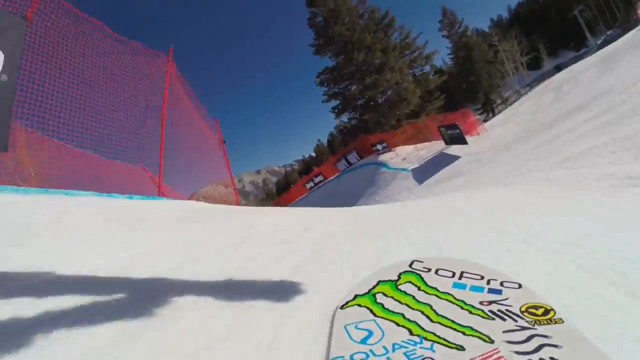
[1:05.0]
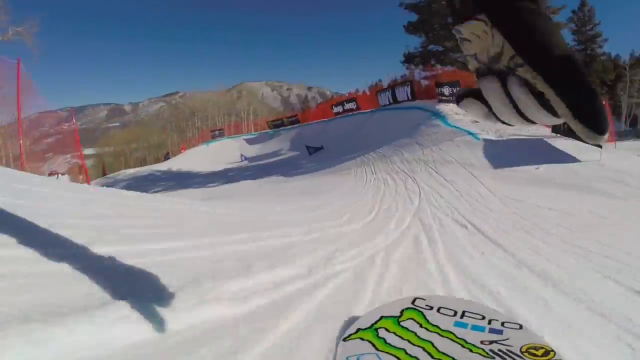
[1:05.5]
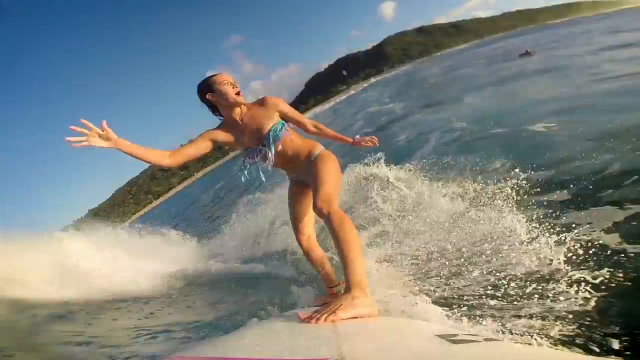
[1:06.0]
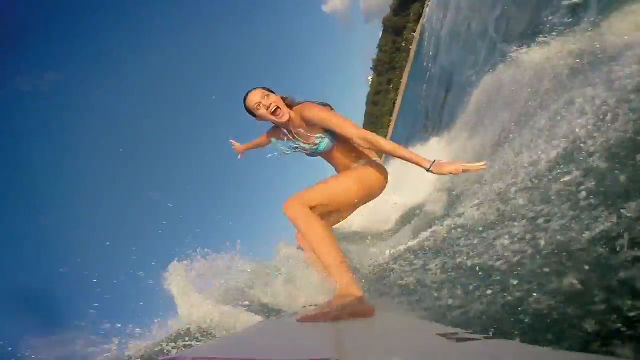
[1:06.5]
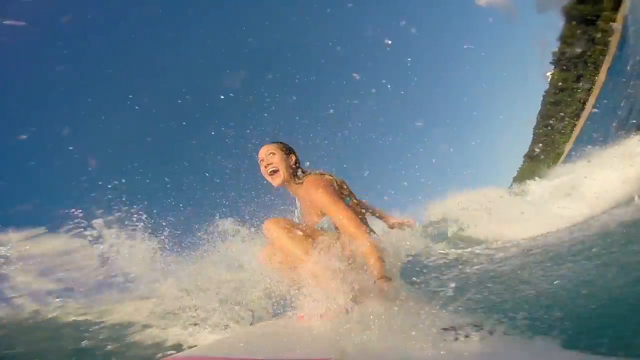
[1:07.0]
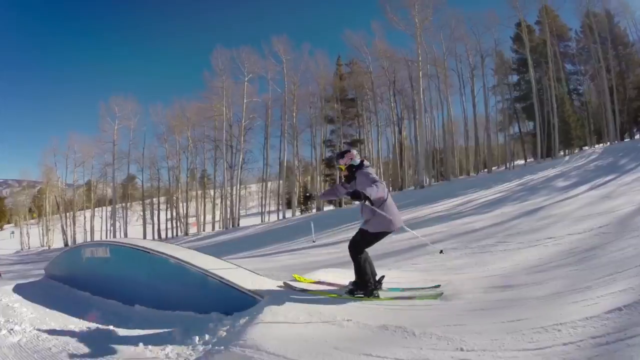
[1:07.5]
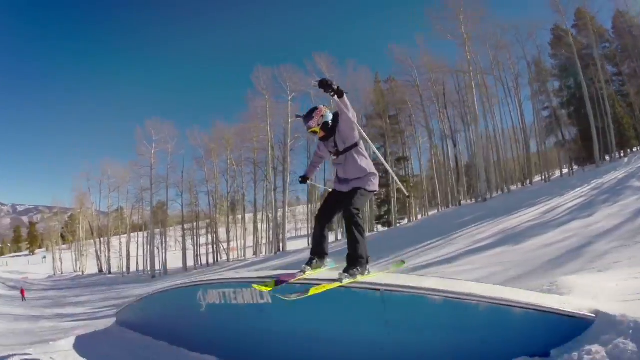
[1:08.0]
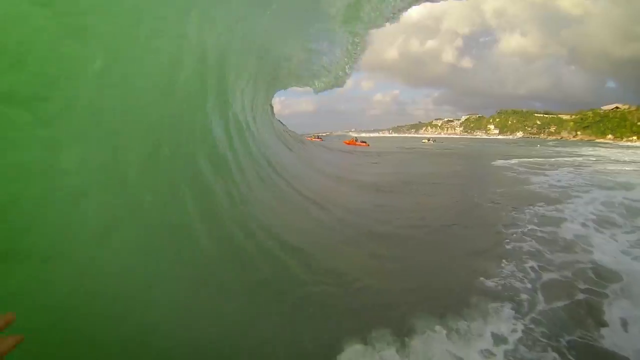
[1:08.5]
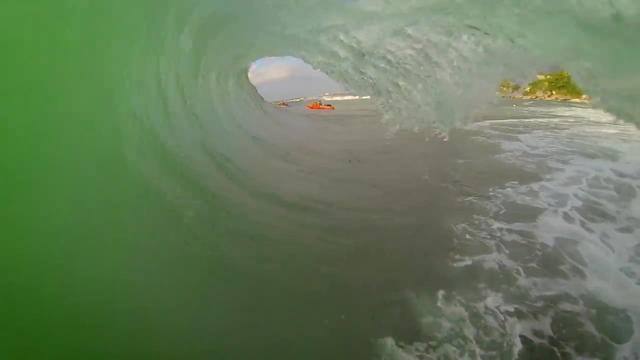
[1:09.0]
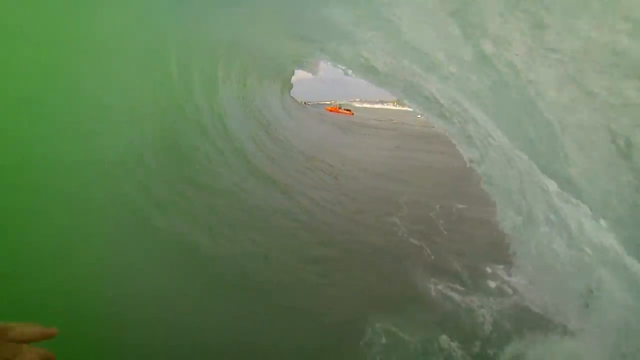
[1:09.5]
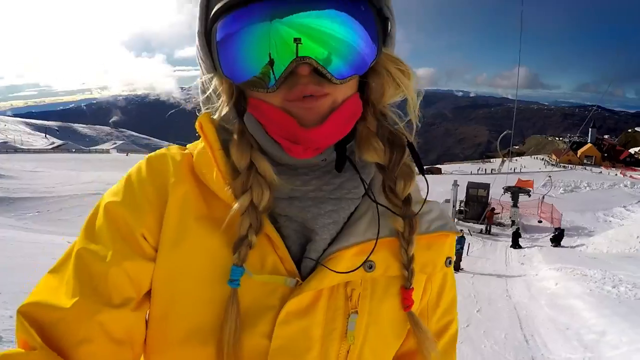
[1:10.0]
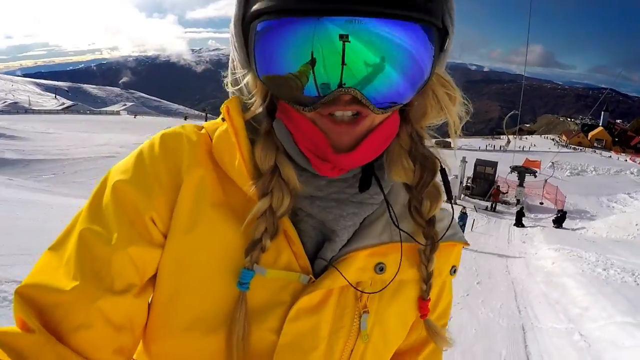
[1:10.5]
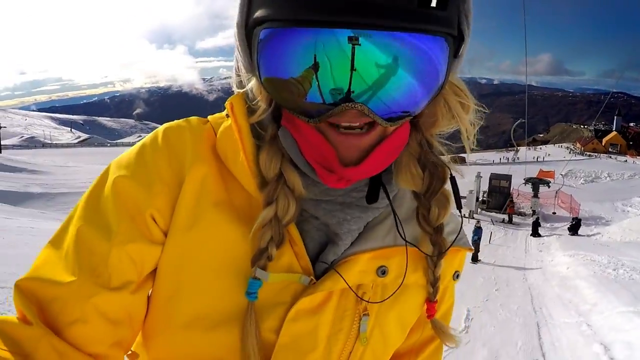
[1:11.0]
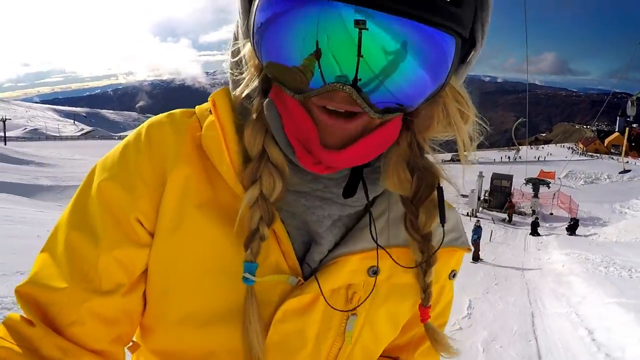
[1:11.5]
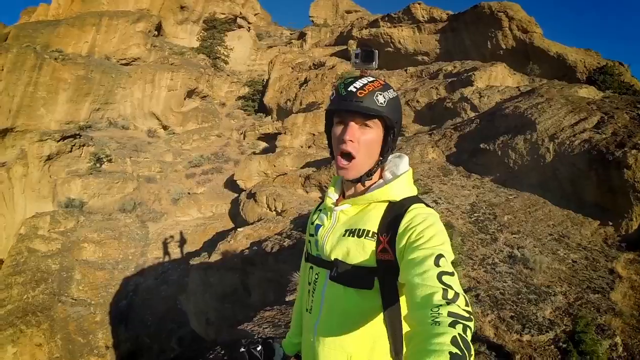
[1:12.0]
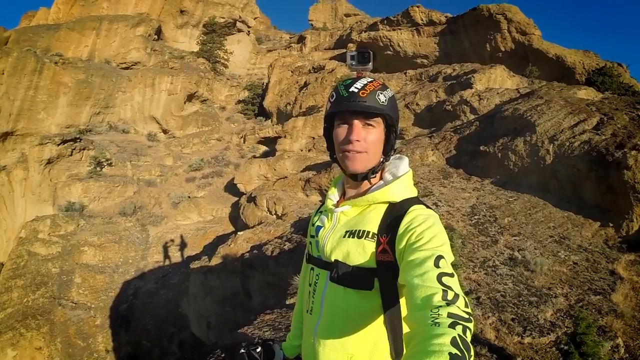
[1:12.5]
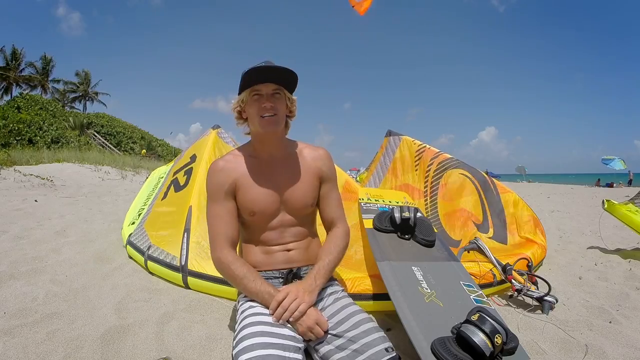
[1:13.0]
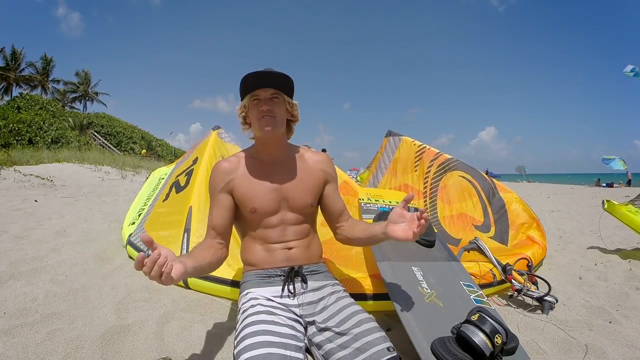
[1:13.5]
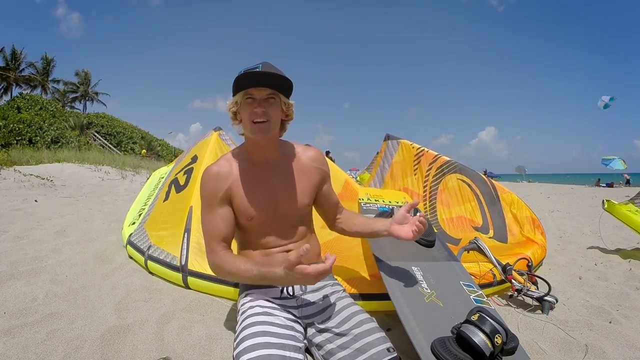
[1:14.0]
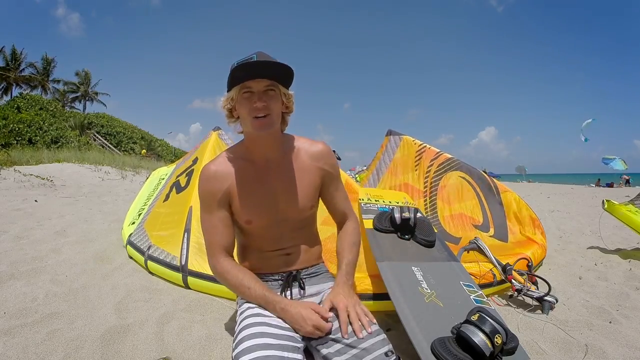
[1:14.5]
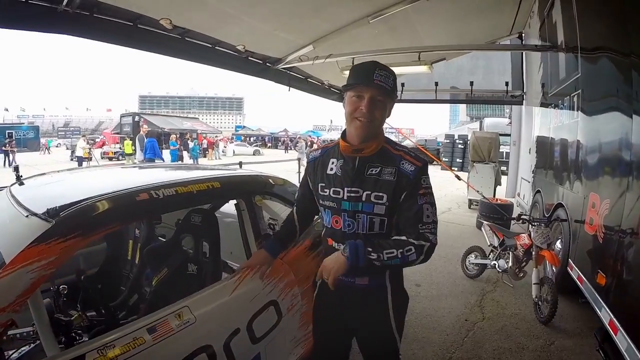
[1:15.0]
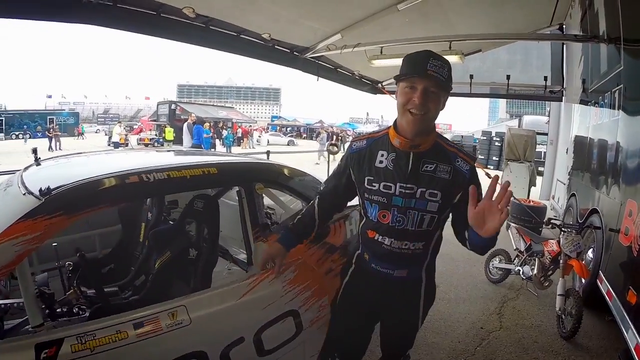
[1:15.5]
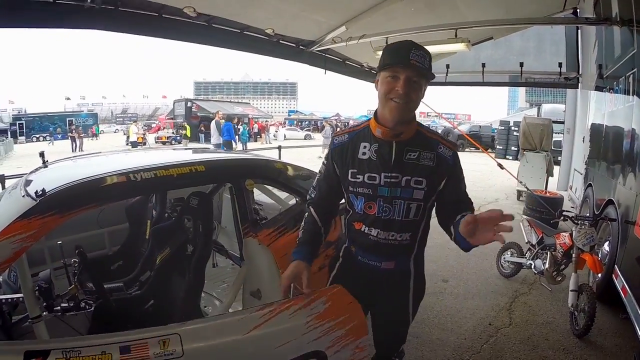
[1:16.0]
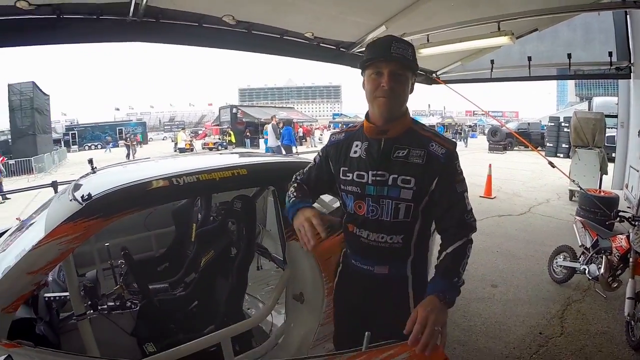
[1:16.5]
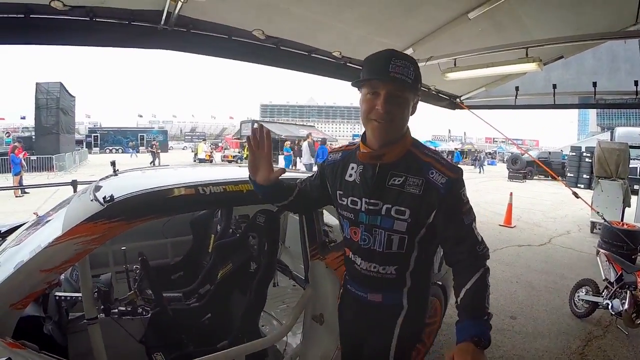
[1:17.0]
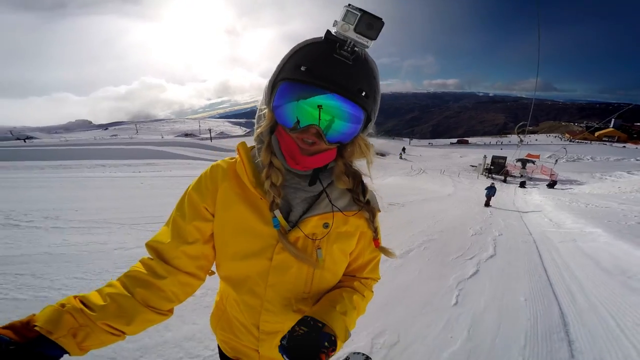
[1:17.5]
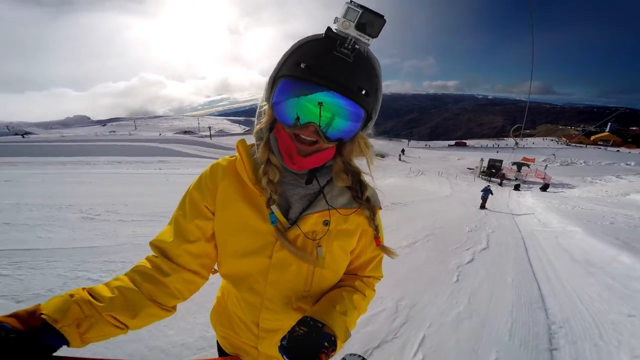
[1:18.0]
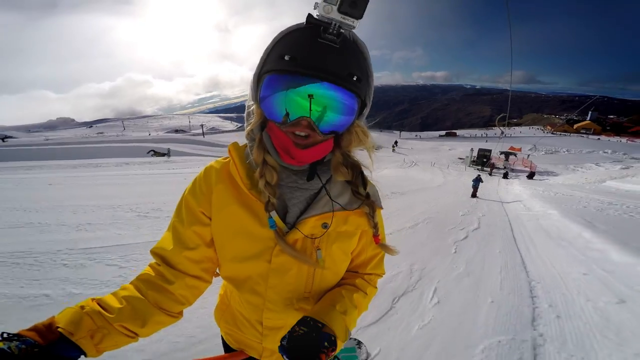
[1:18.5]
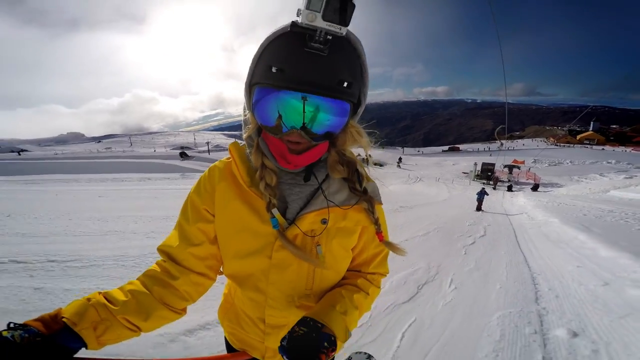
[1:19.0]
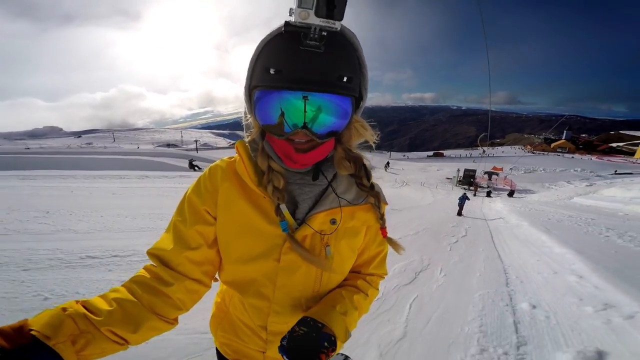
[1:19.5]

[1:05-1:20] Someone is snowboarding, and a woman or girl is surfing for the first time; the GoPro is apparently on her surfboard, and she bends down, looking like she is having the time of her life. Someone is skiing for the first time, jumping on a slope and gliding over it. The view returns to the waves, which are crashing, with a surfer's POV going into a wave, so the surfer cannot be seen. A blonde girl with pigtails in a yellow jacket, who is skiing or snowboarding, talks to the camera. Then the different people talk to the camera: the paraglider, the skydiver, the racer, the skier and the snowboarder.